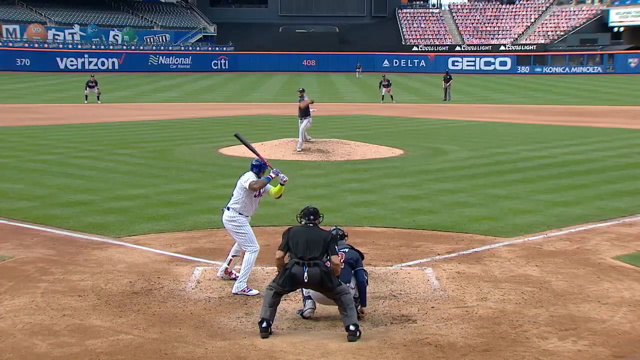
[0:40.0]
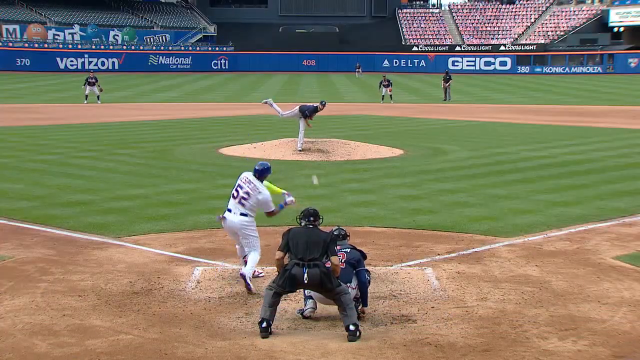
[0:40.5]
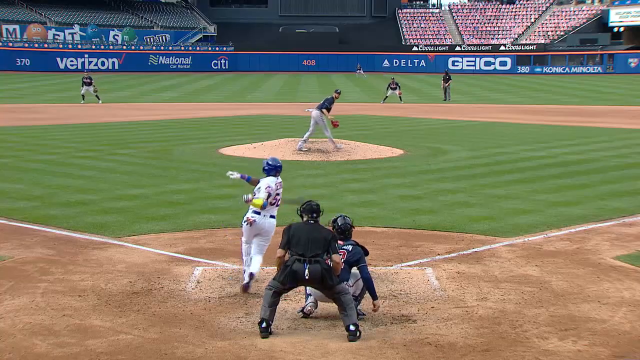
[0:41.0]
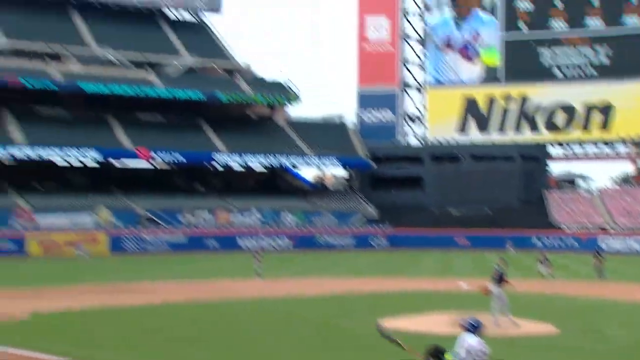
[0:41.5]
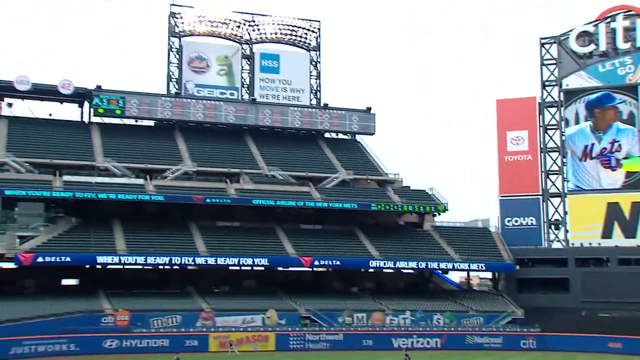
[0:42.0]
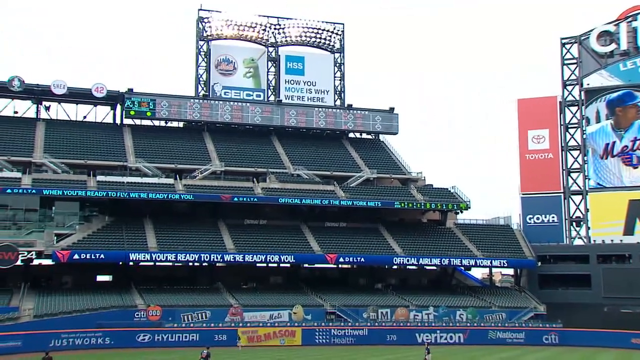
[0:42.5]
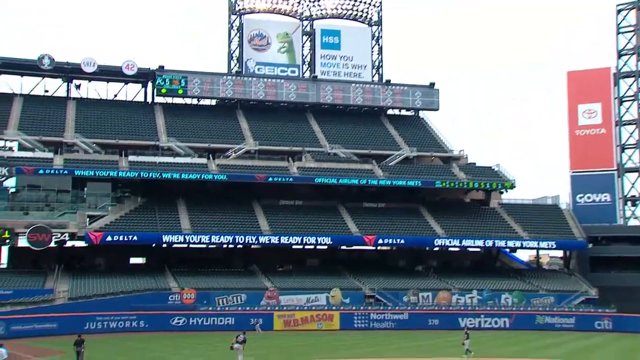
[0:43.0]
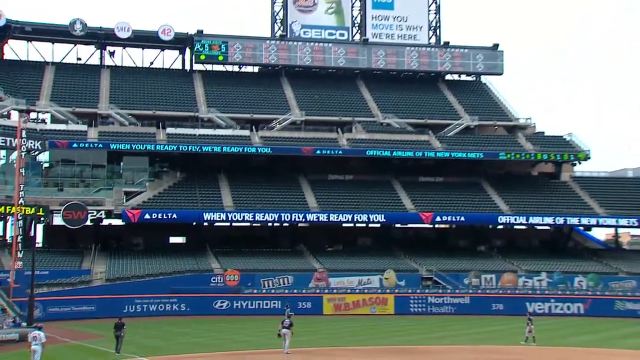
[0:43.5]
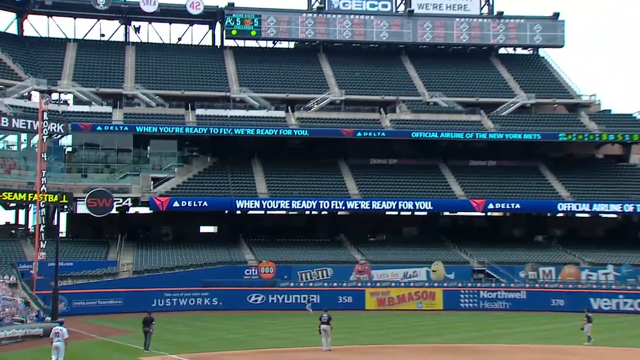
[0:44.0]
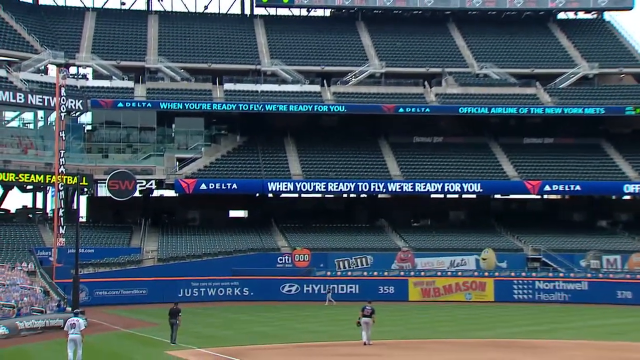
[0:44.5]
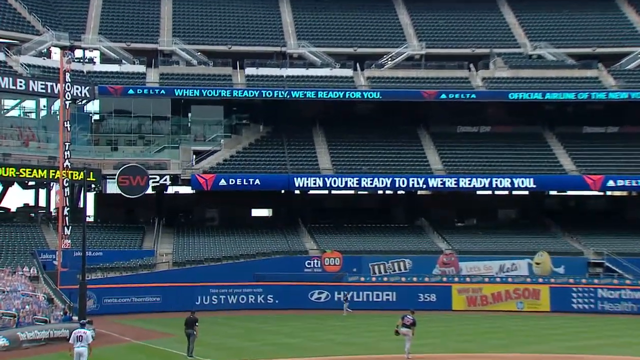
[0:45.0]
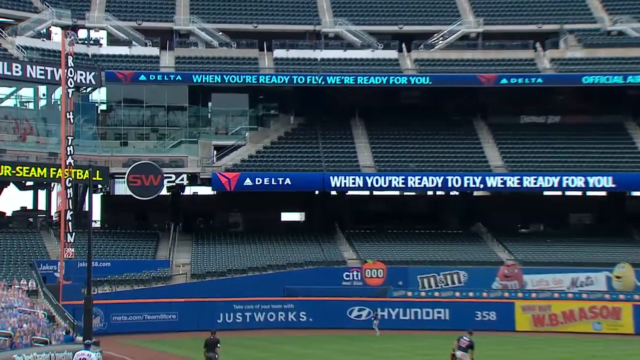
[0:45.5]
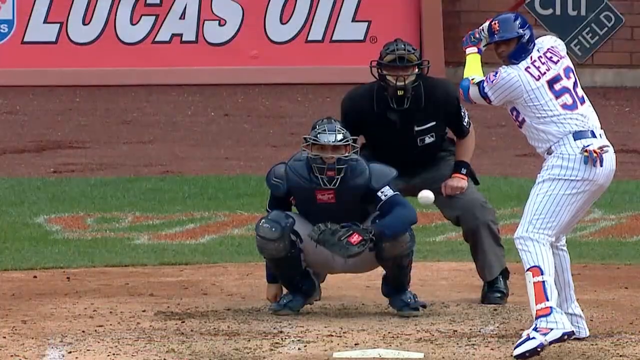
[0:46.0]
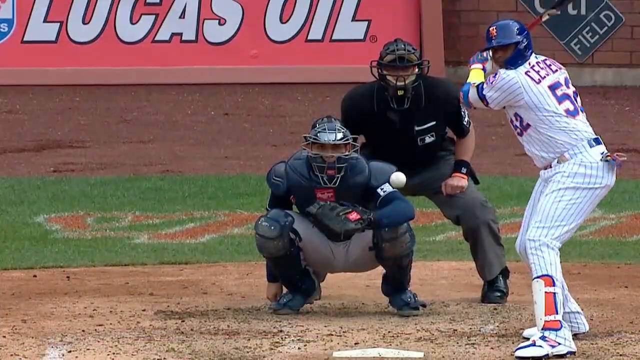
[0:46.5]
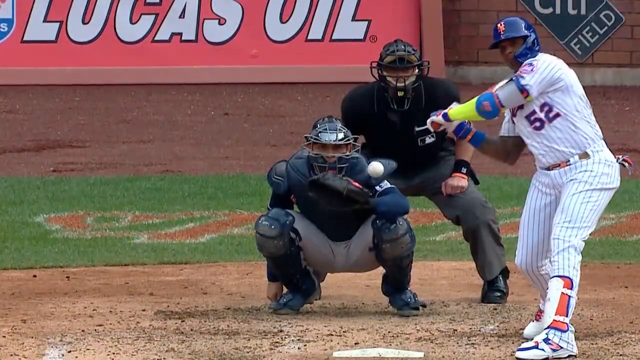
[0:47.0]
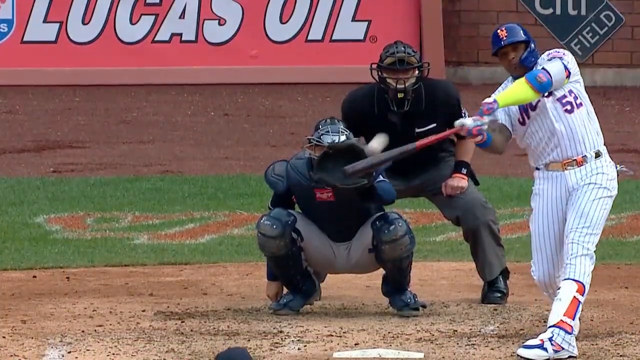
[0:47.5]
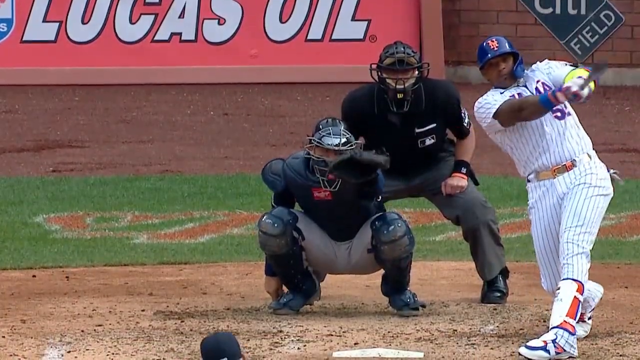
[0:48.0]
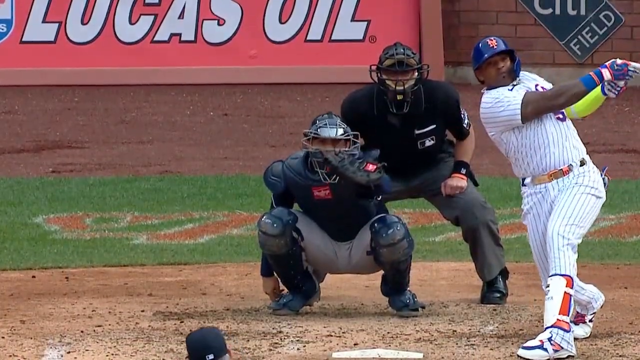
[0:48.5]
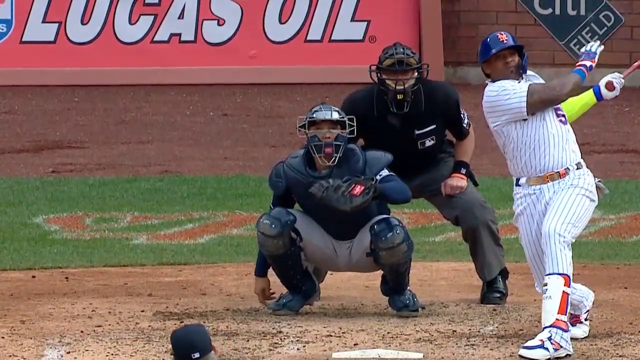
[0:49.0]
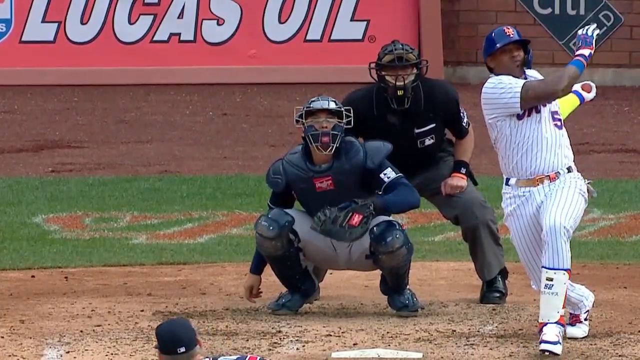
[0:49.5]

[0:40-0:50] A replay of the home run plays from the camera behind home plate: the pitch comes in and Cespedes swings and blasts it to left. The camera follows the ball, and the left fielder takes a few steps toward it before stopping. Another replay, in slow motion, shows just the catcher, umpire and hitter; the ball, middle-middle, is struck by Cespedes, who finishes with a one-arm follow-through. As the camera follows the ball in the air, a Geico advertisement is visible on the very top of the stadium, next to another one for HSS that reads "how you move is why we're here." A Toyota sign and a Goya sign are next to the big board in center field, and other advertisements on the outfield wall include Hyundai, WB Mason and M&Ms.